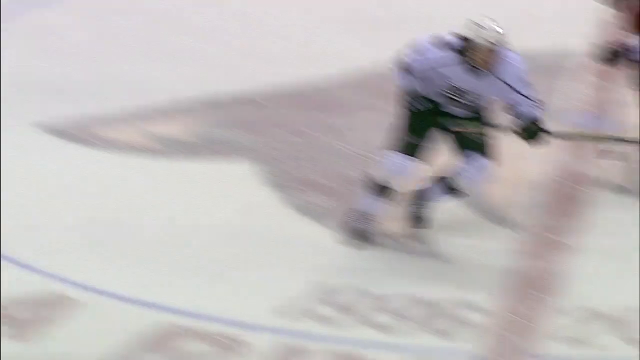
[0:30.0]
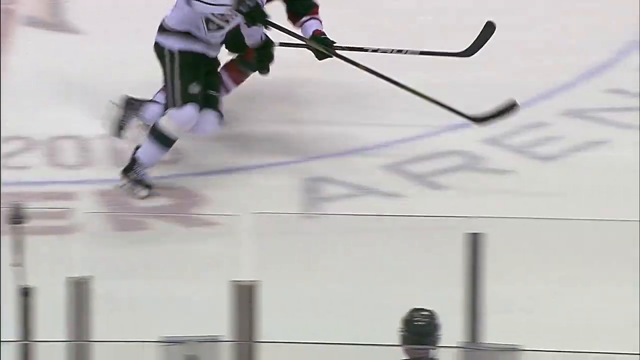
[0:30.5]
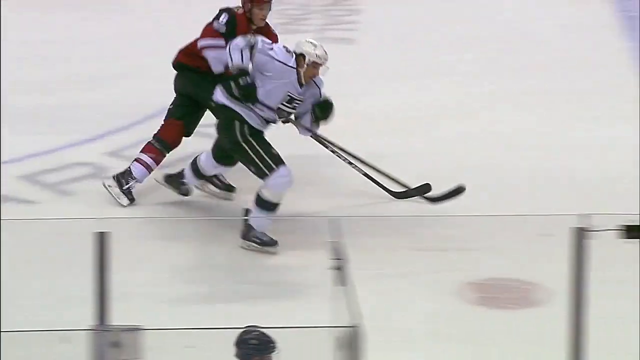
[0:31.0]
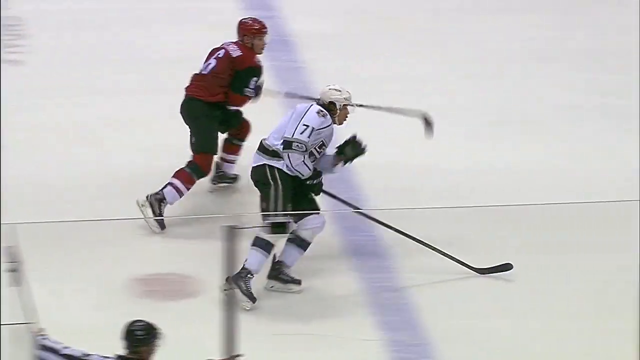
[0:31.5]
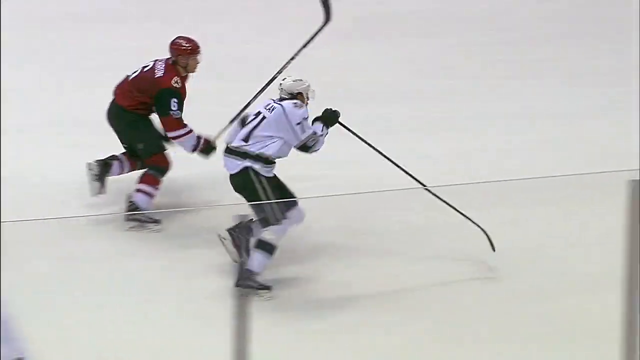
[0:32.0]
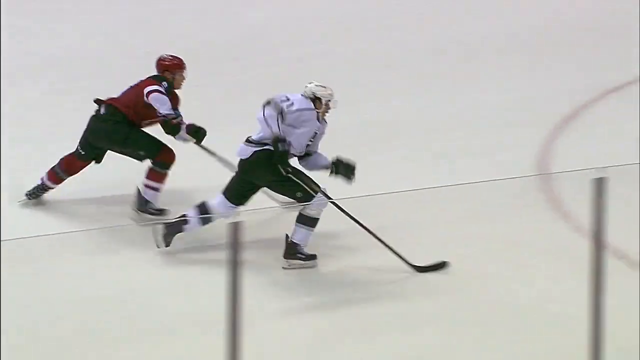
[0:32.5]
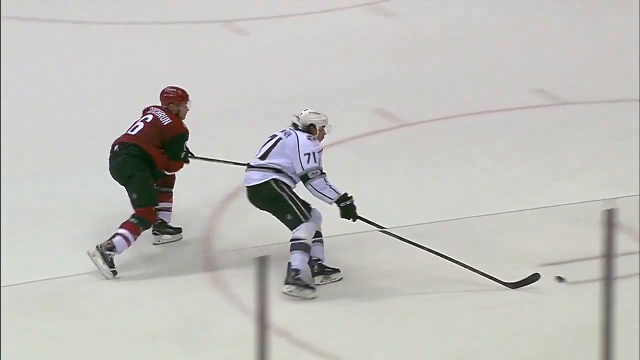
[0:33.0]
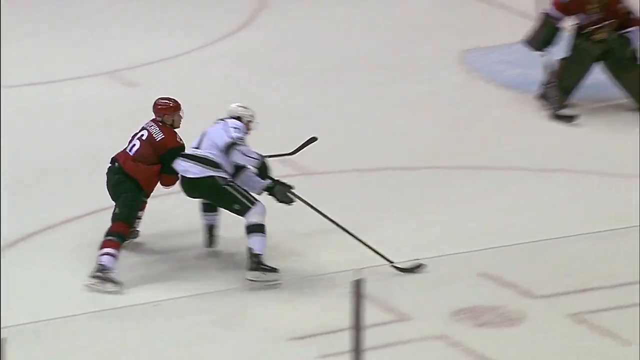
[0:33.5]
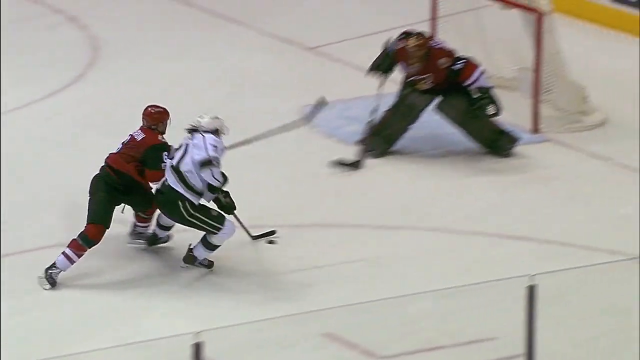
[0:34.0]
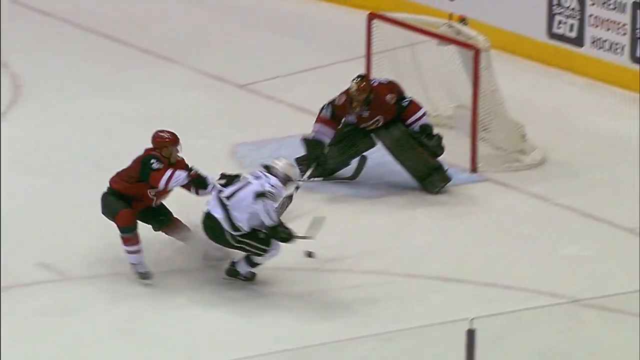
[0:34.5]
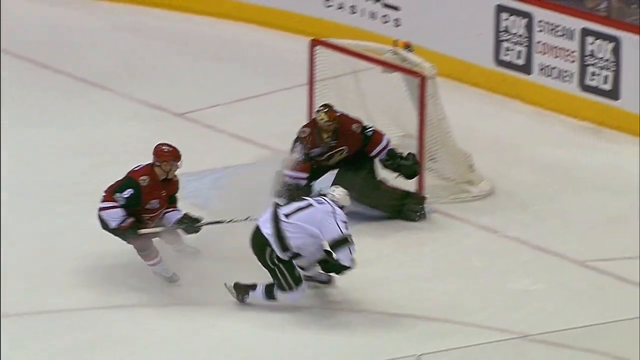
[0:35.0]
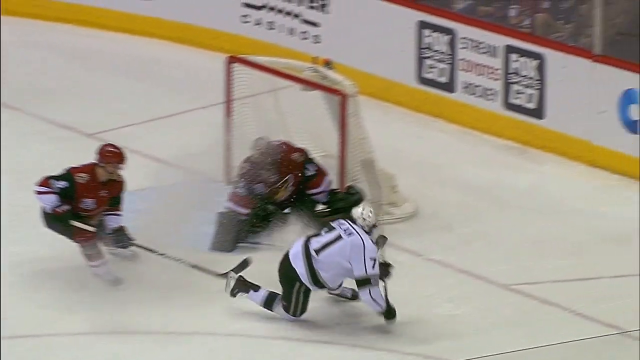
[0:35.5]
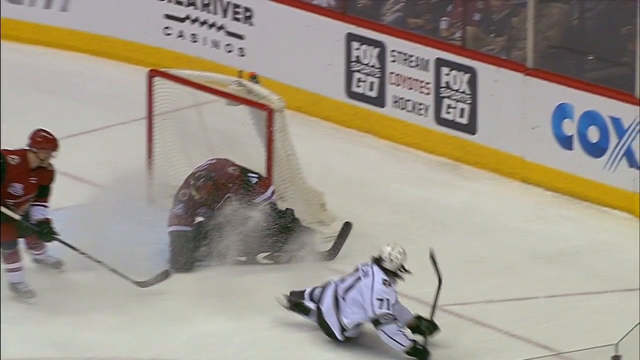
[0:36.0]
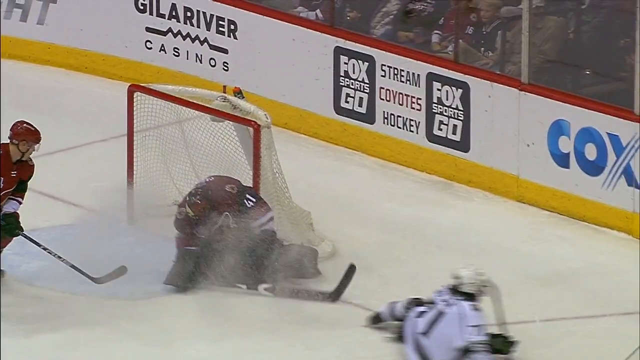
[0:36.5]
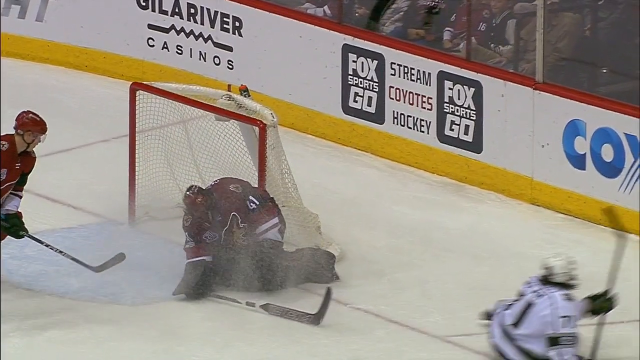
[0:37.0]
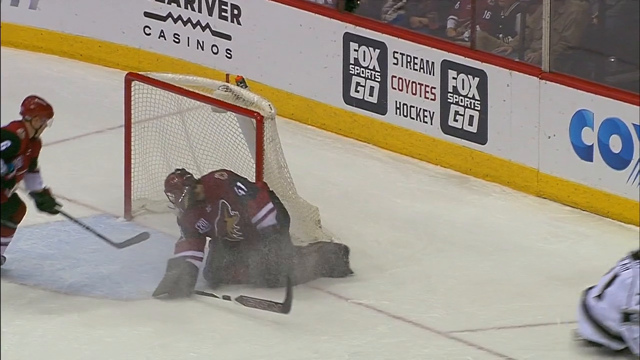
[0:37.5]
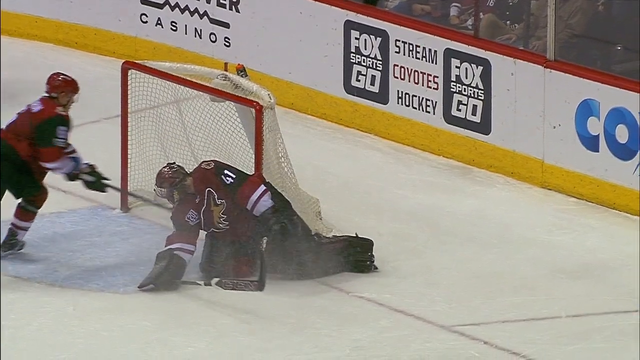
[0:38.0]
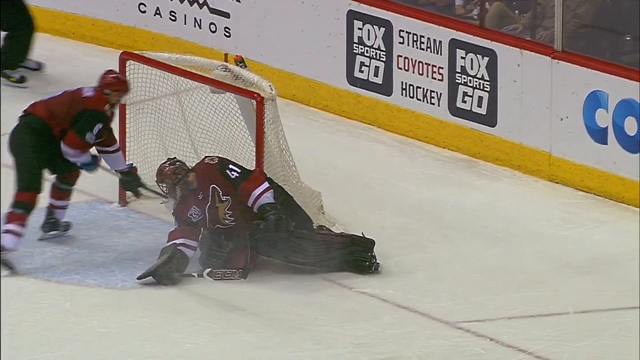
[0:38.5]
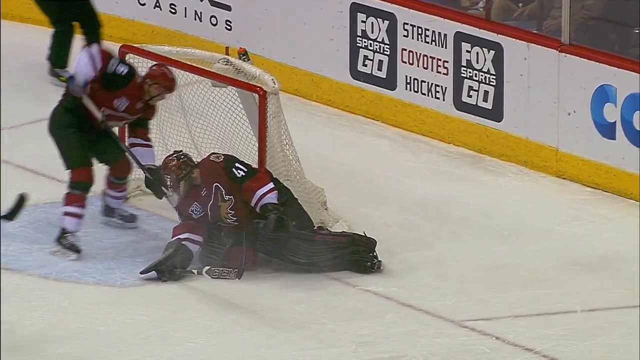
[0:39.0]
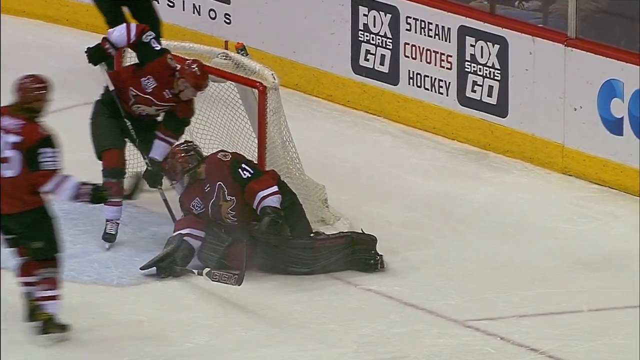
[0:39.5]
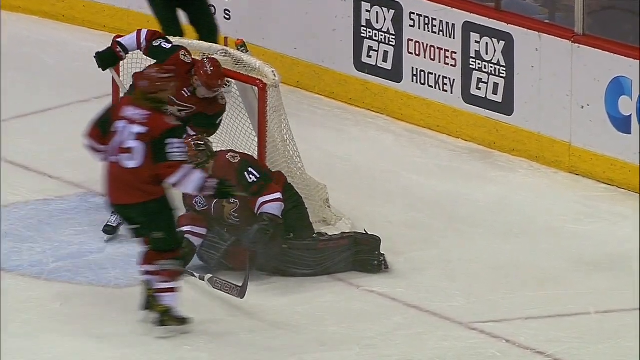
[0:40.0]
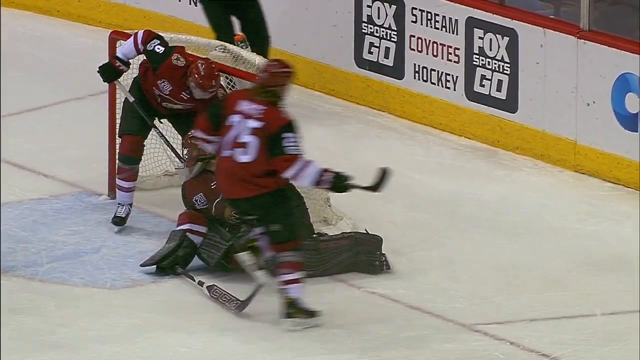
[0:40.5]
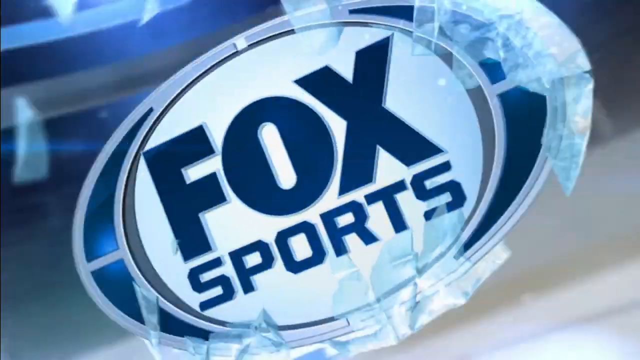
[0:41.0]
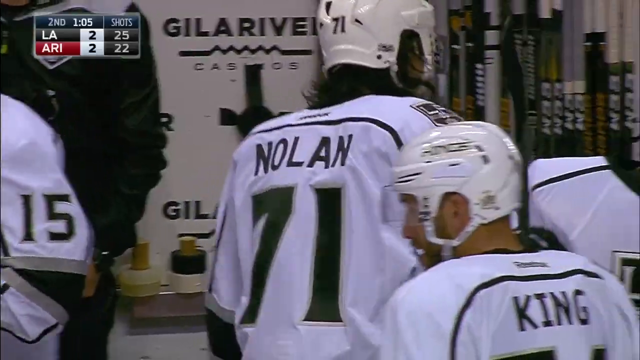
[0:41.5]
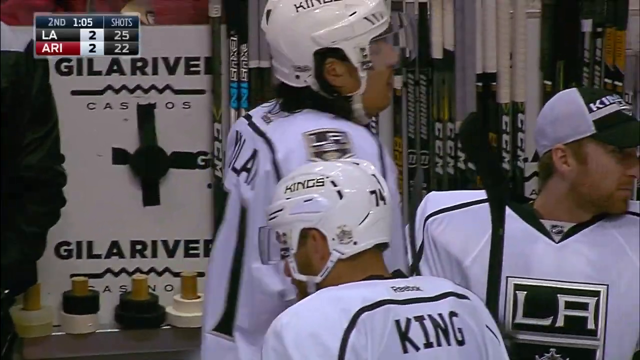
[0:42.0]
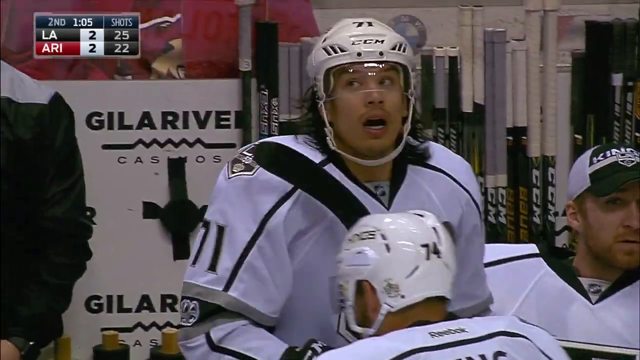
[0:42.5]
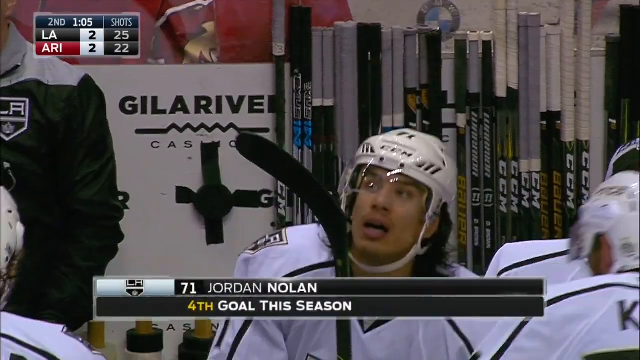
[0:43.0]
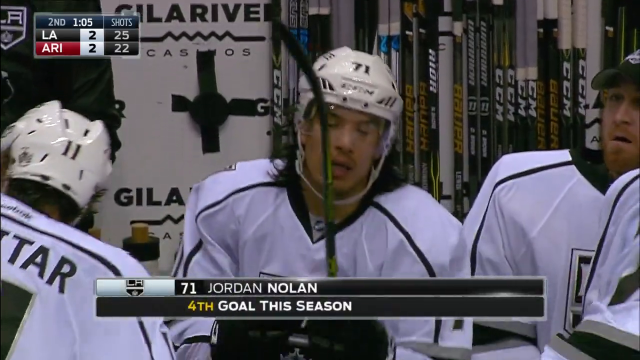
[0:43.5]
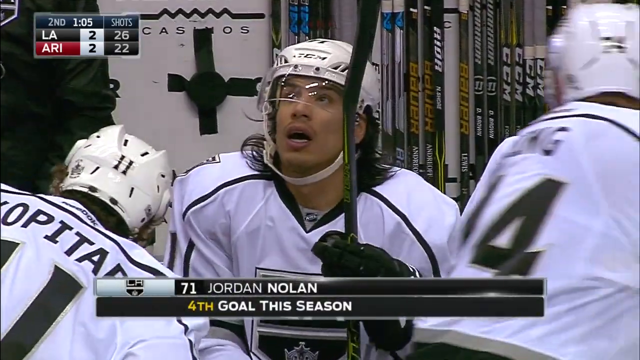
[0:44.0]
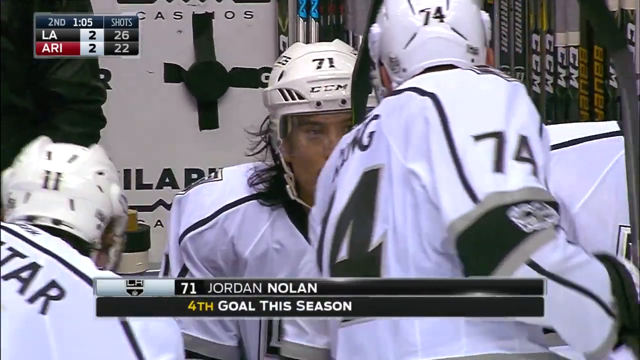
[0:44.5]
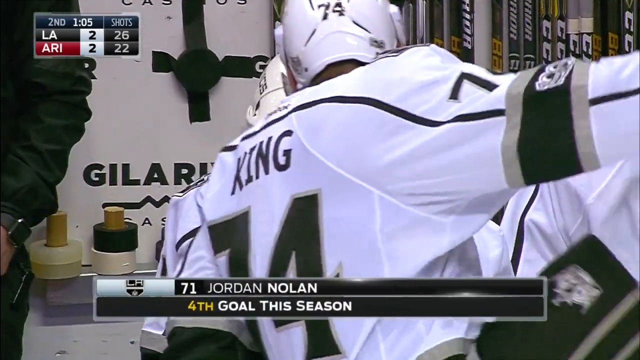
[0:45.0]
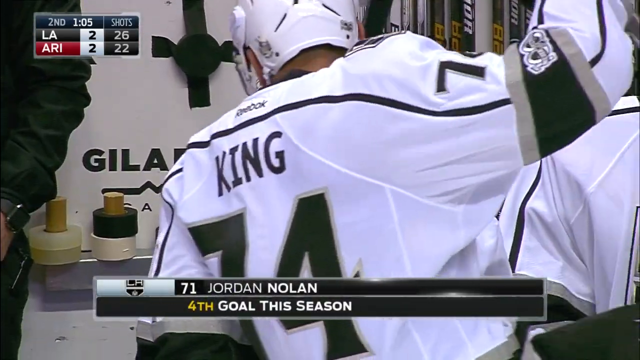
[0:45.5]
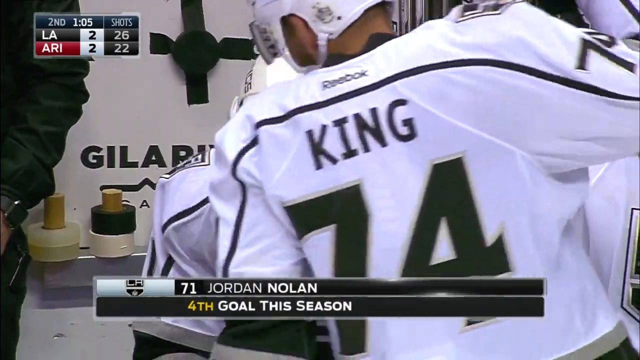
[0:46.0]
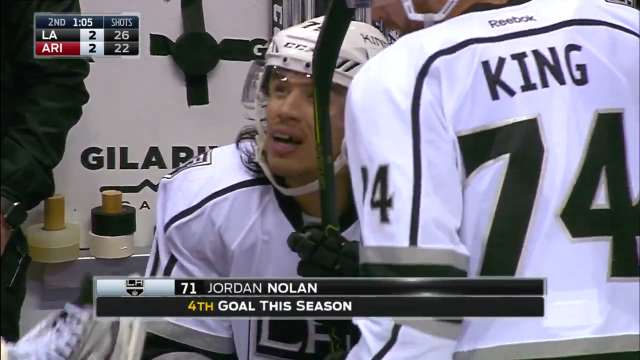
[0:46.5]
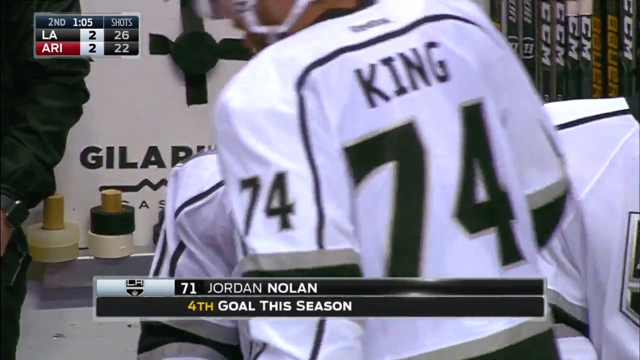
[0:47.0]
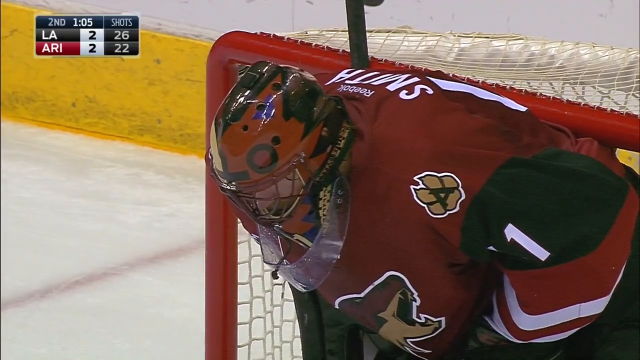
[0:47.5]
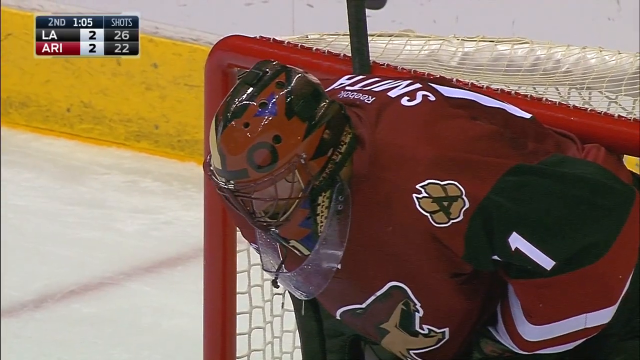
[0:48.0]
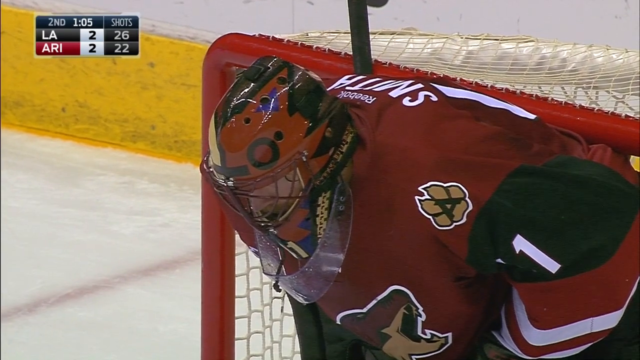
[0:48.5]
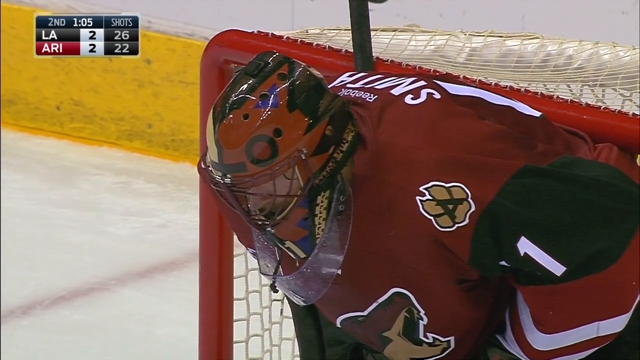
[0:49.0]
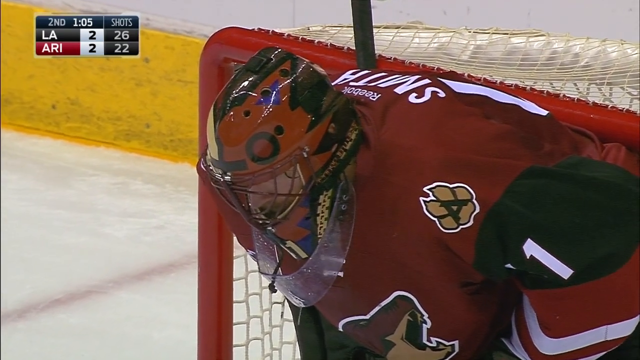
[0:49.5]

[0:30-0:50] The players celebrate, then go back to the game and actively fight to get the ball inside. The goalkeeper of the red team falls down, giving the team in white the goal, and text indicates that this is the fourth goal. Moments later the players are shown tired from fighting, and the goalkeeper on the red team is shown sweating.